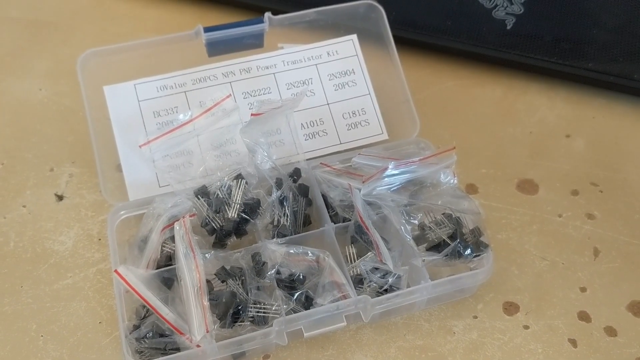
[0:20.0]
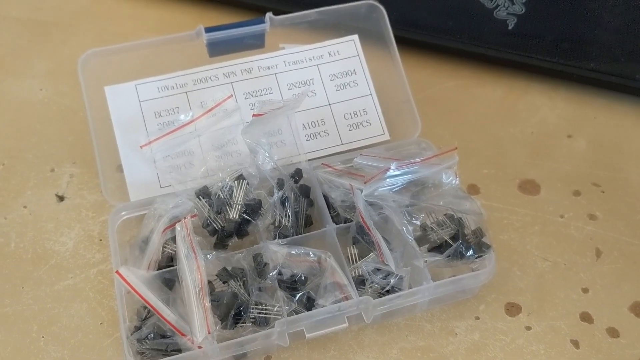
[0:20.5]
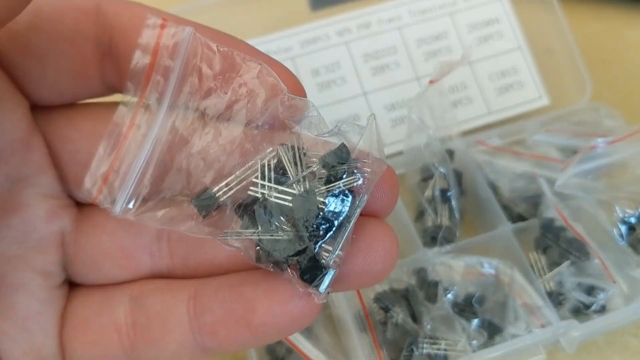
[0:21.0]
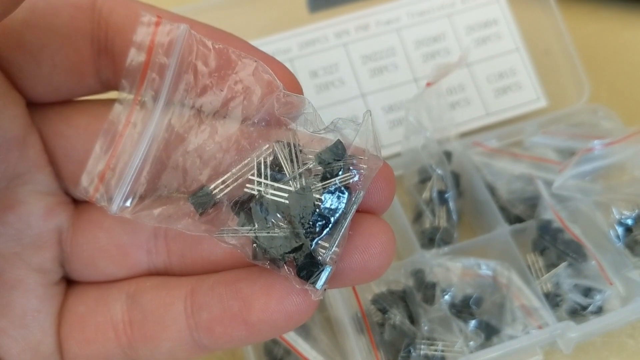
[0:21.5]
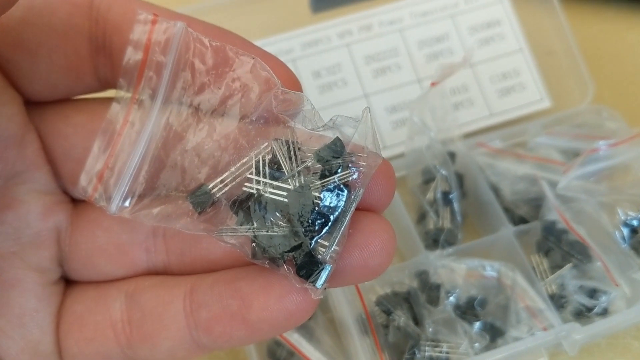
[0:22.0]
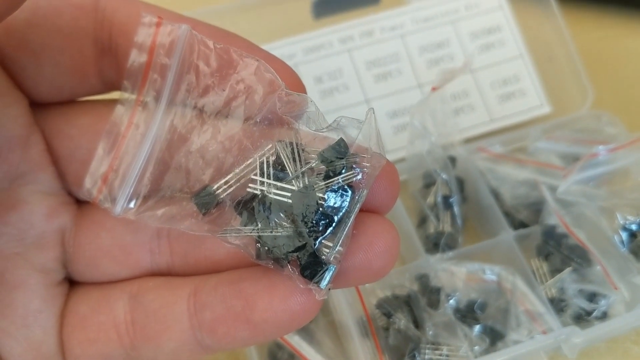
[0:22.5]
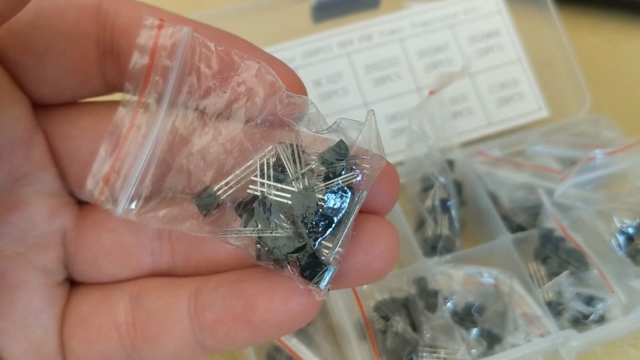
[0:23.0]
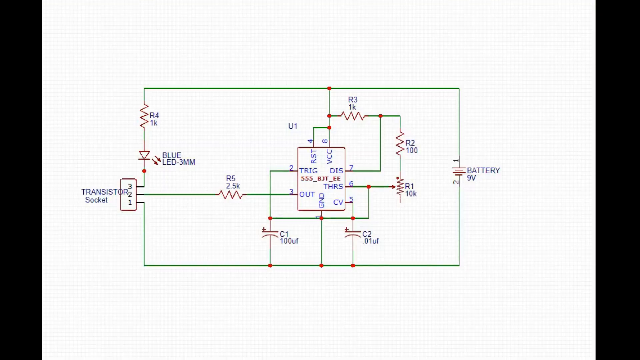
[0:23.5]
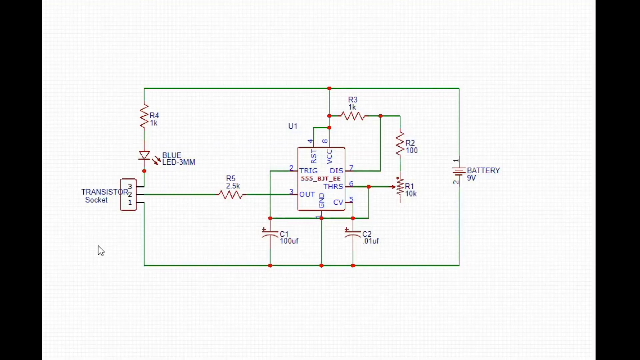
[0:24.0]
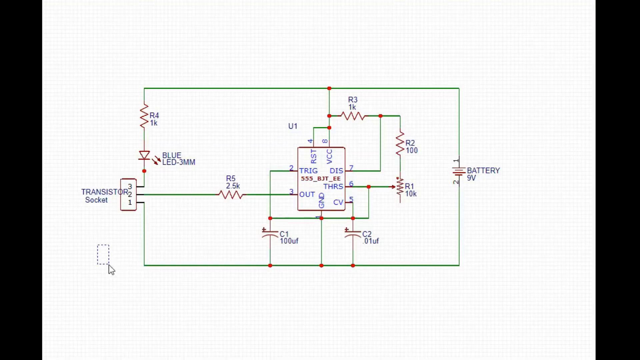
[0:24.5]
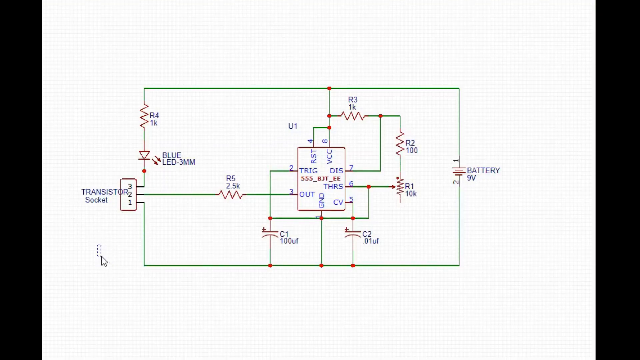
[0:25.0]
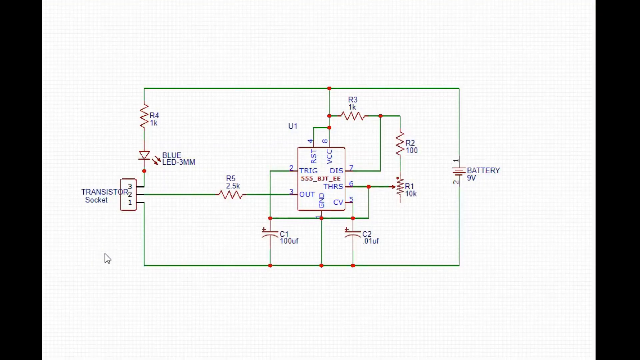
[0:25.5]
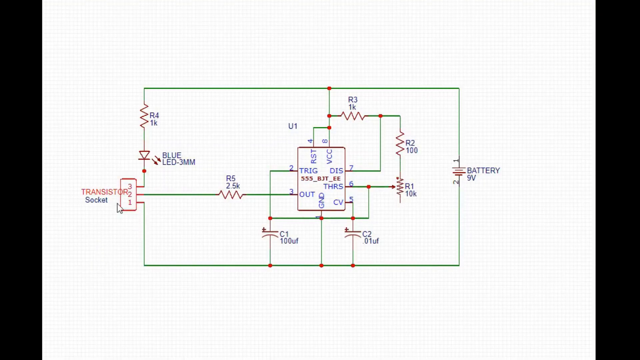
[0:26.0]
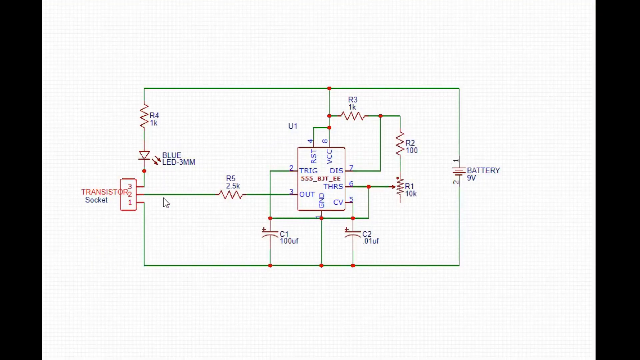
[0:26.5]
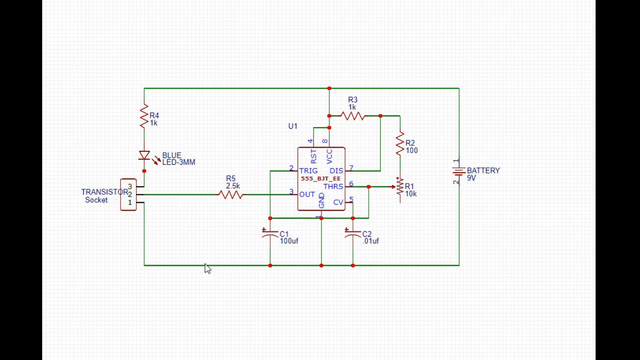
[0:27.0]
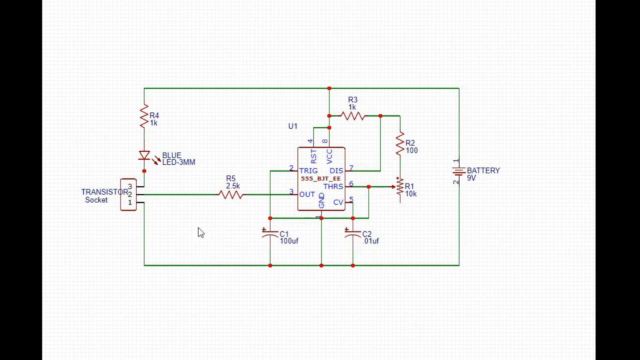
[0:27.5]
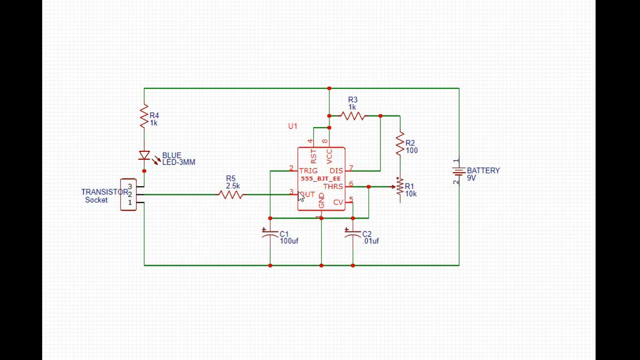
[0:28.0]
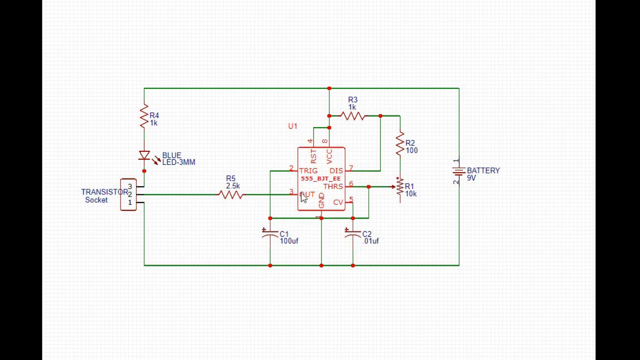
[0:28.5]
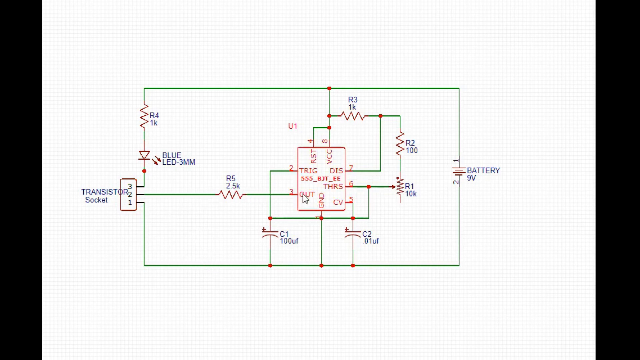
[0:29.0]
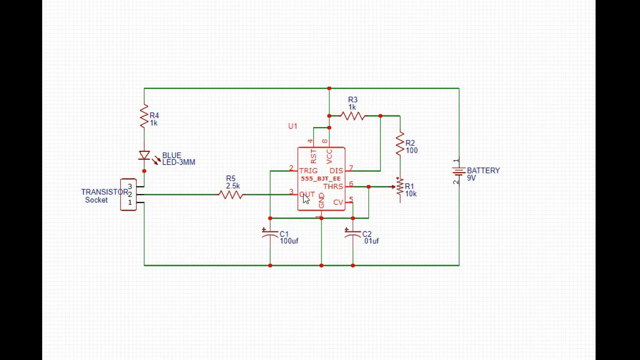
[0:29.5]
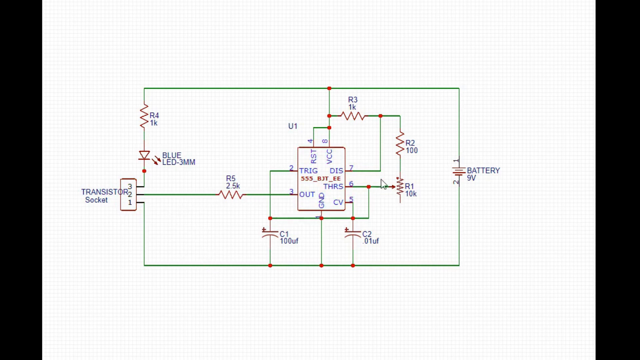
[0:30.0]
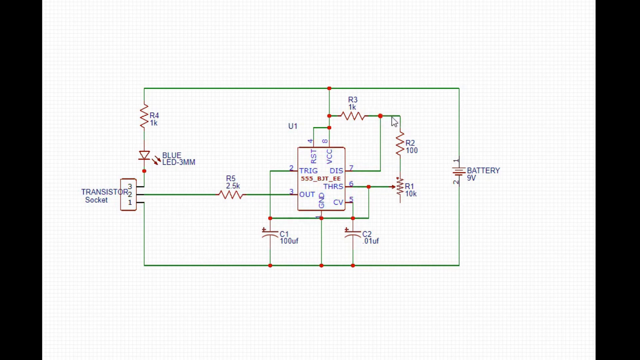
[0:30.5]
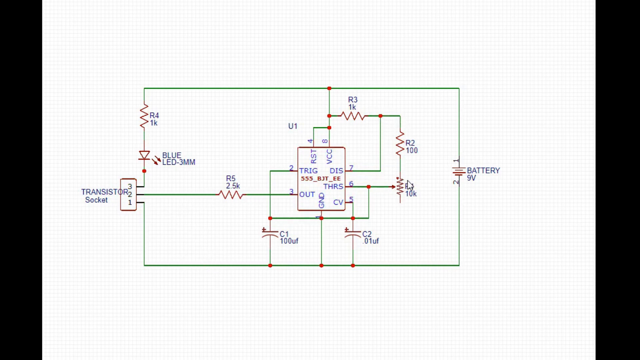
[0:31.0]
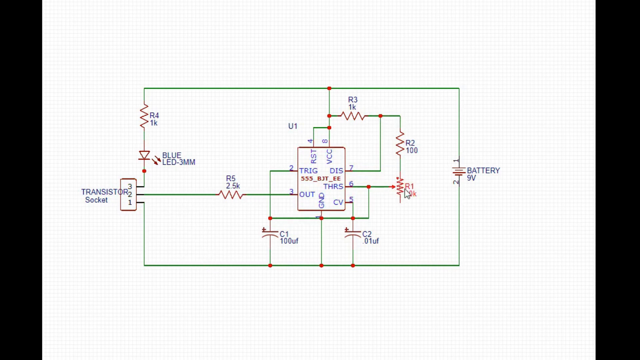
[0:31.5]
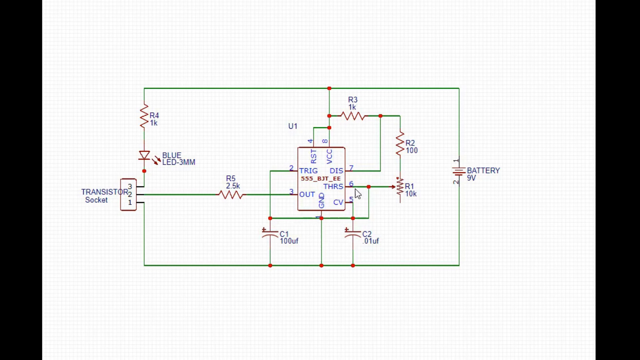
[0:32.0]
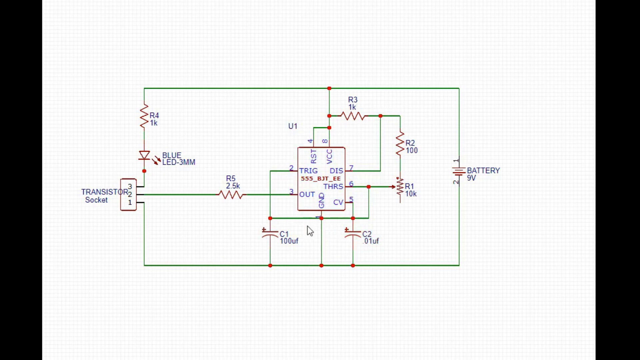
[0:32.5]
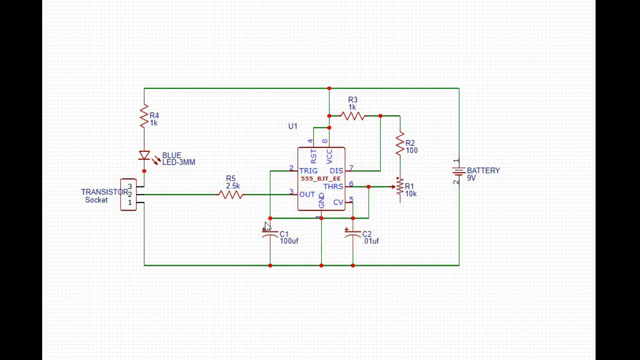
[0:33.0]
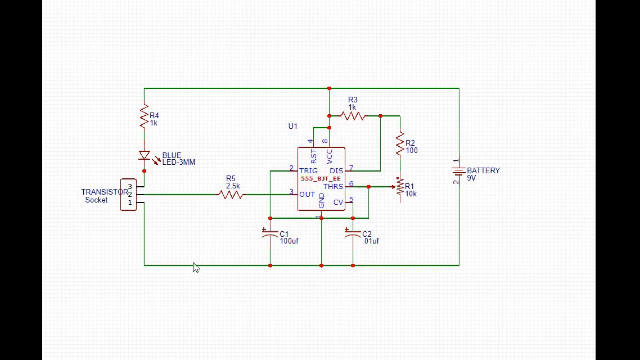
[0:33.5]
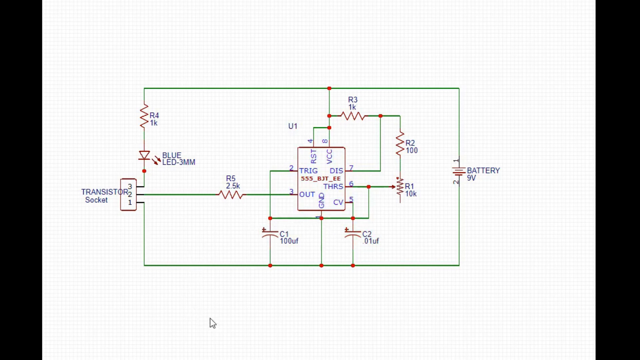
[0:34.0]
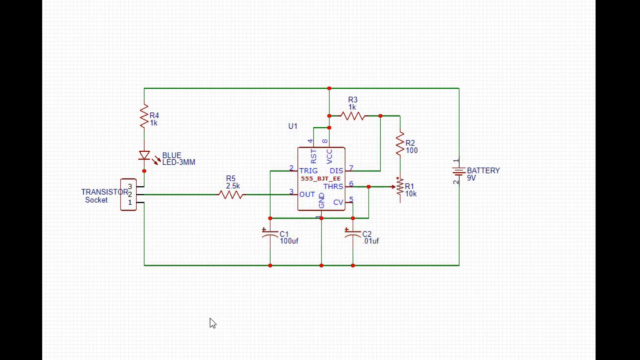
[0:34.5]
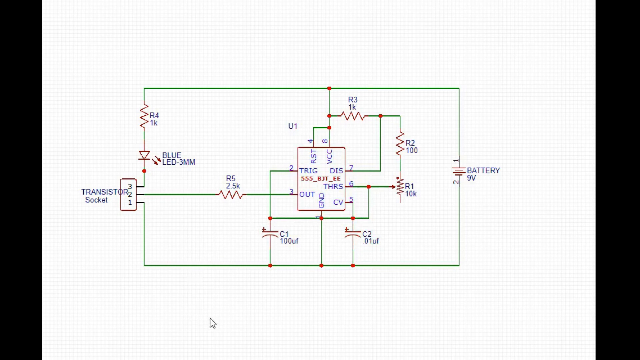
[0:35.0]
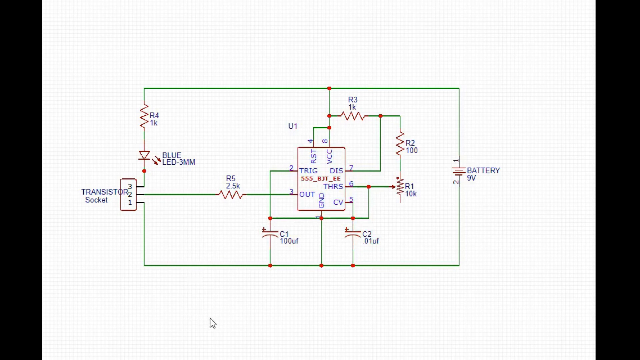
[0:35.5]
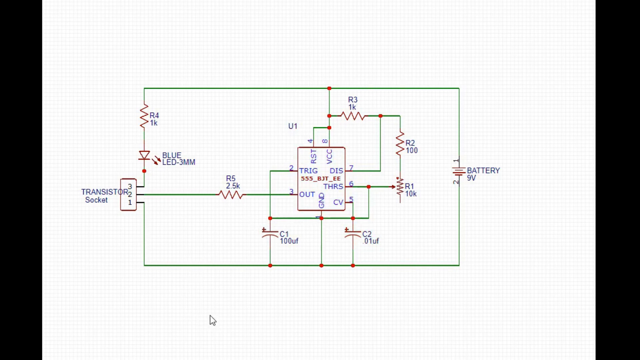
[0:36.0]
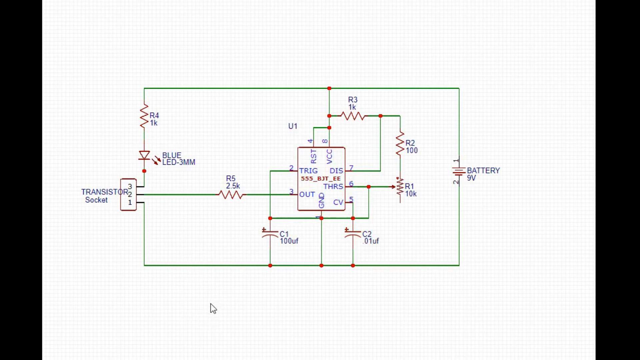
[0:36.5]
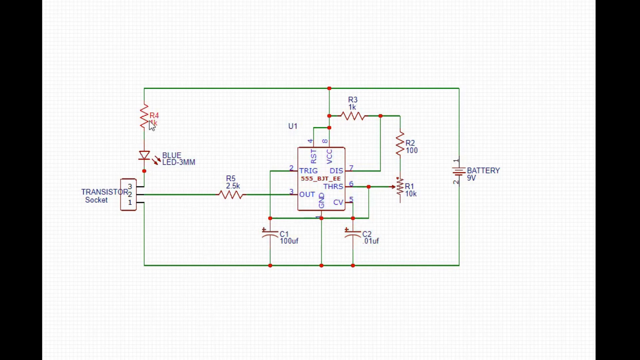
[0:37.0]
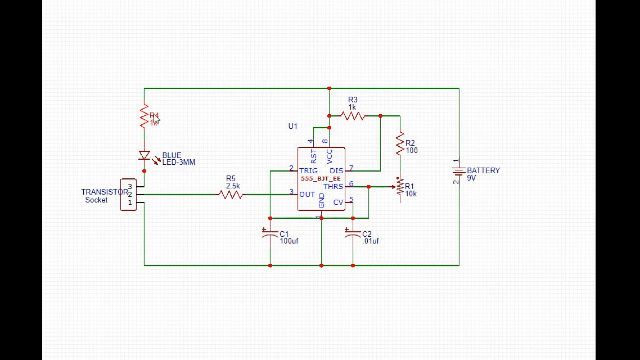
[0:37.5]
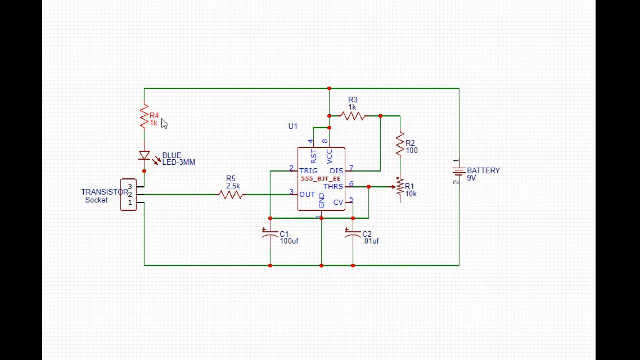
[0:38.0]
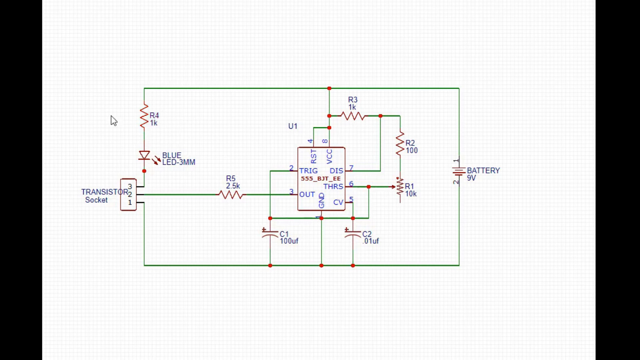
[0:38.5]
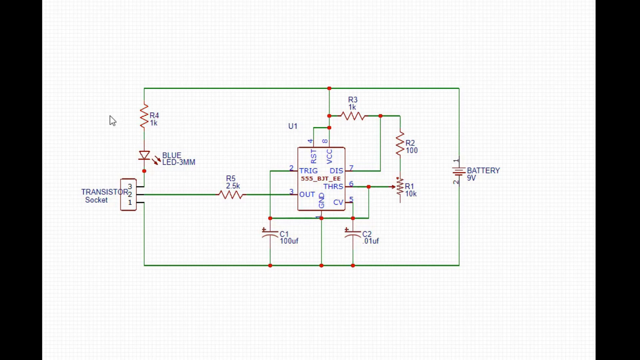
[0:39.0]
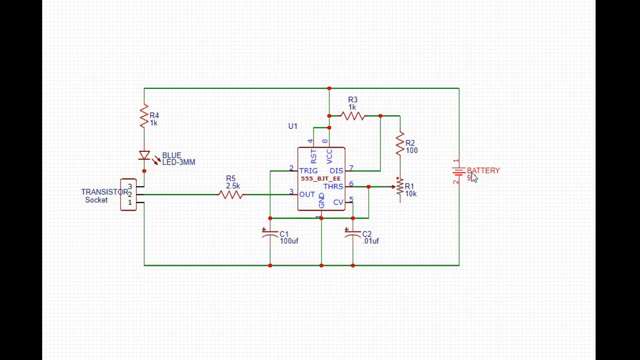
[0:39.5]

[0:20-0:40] Many small components are in a box with dividers, each section holding its own components. The components are in small zip-top bags with a red strip showing they are zipped shut. A person's hand holds out these small components. A diagram then shows how the transistor tester works, with labels all in blue, a green outline, and sections in red. The box is clear and see-through, with labels on the top reading "10 valve 200 pieces NPN PNP power transistor kit," along with labels for each item showing which compartment of the box it is in.